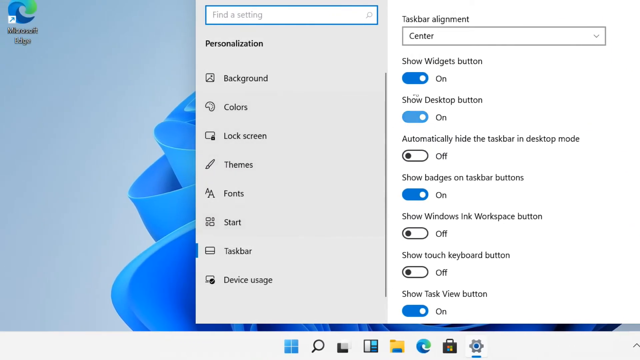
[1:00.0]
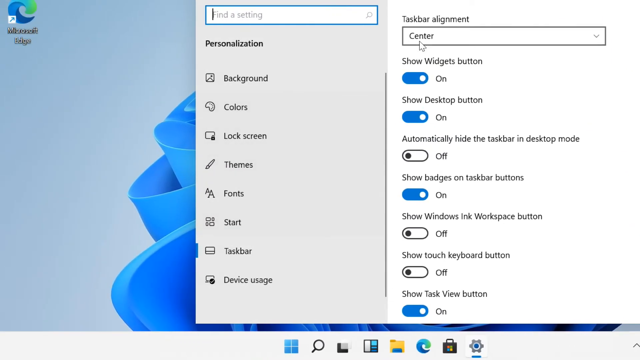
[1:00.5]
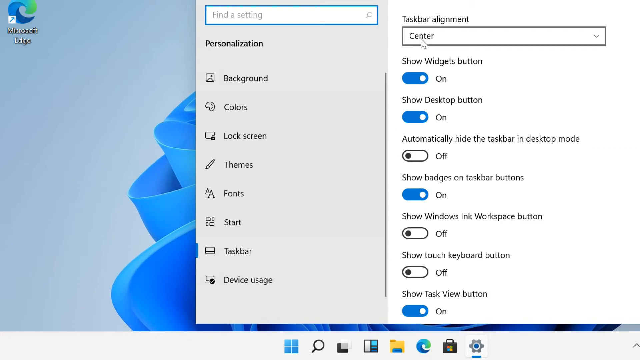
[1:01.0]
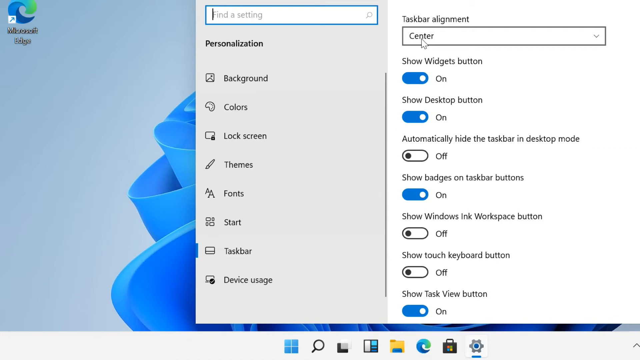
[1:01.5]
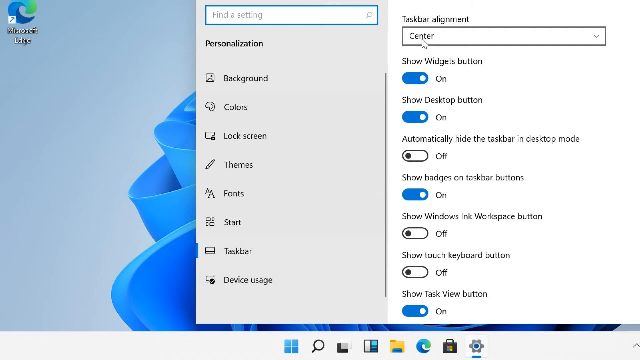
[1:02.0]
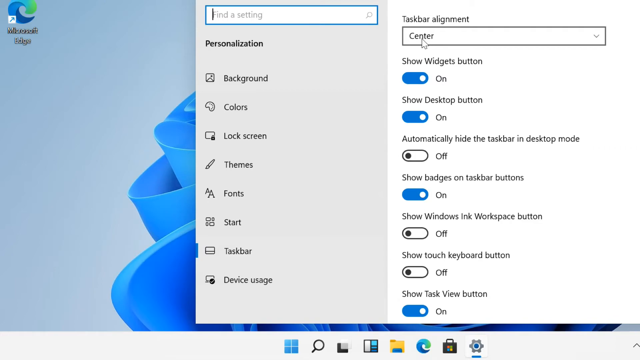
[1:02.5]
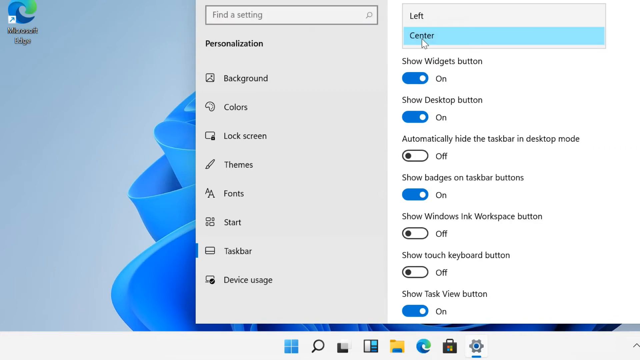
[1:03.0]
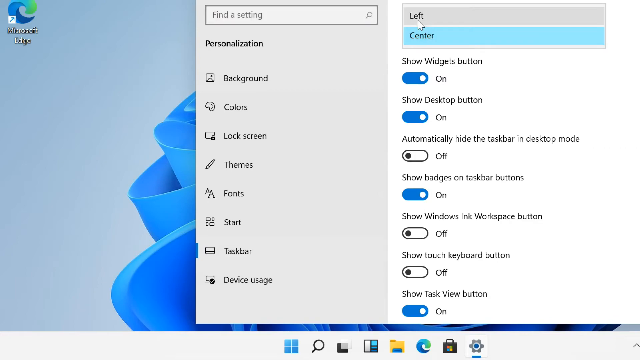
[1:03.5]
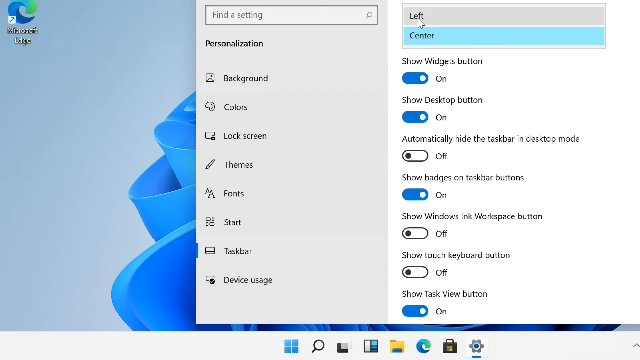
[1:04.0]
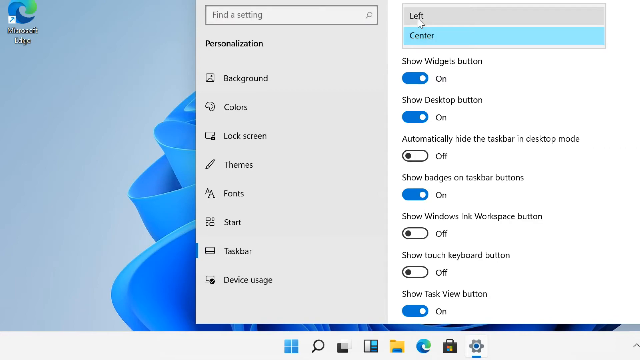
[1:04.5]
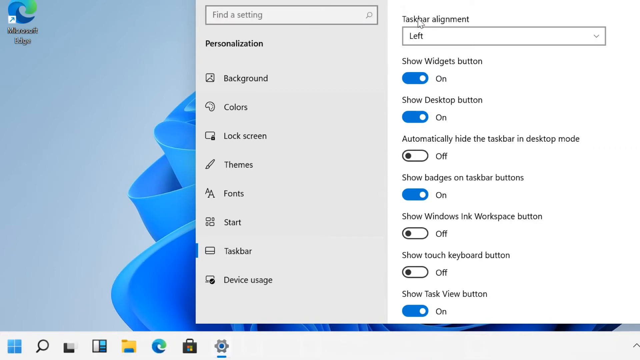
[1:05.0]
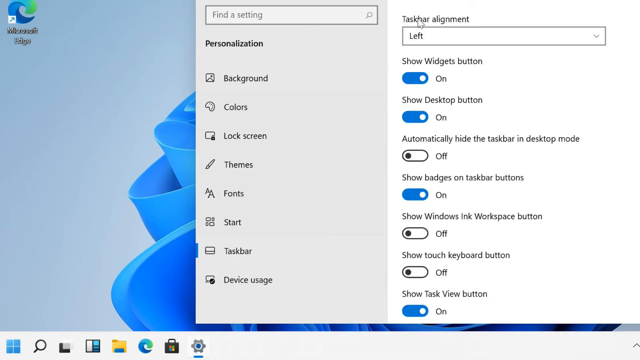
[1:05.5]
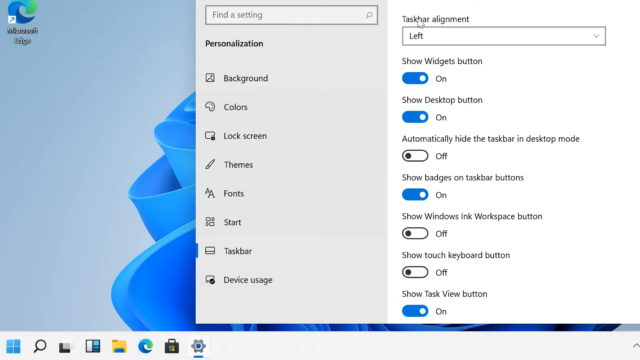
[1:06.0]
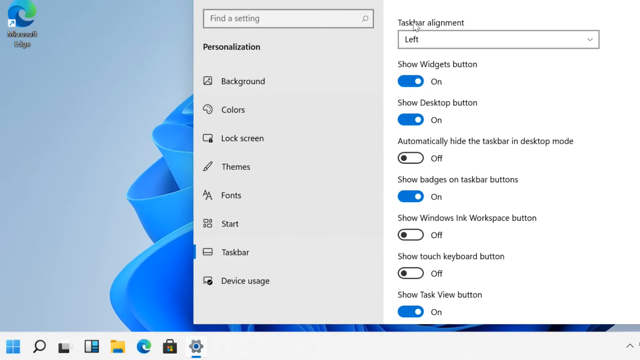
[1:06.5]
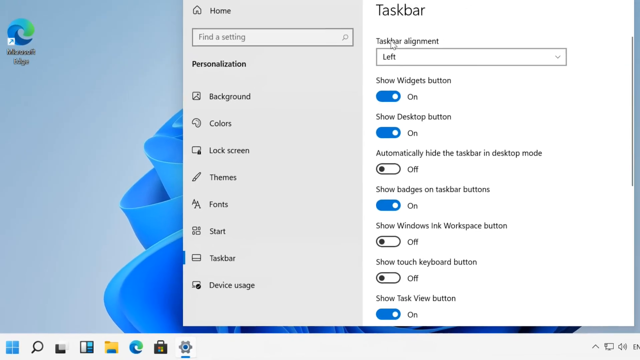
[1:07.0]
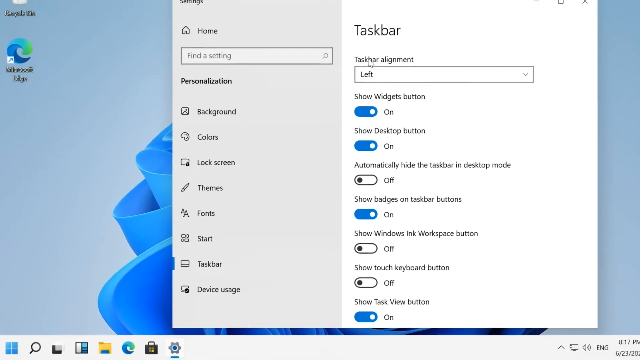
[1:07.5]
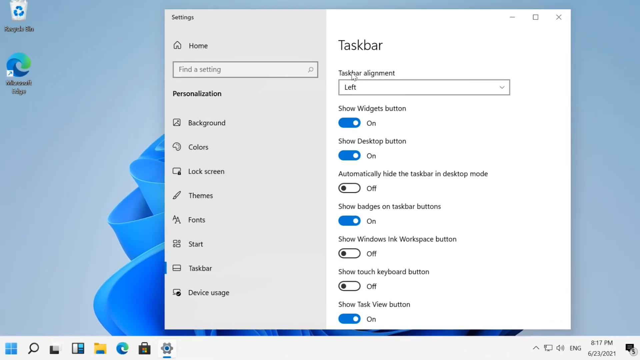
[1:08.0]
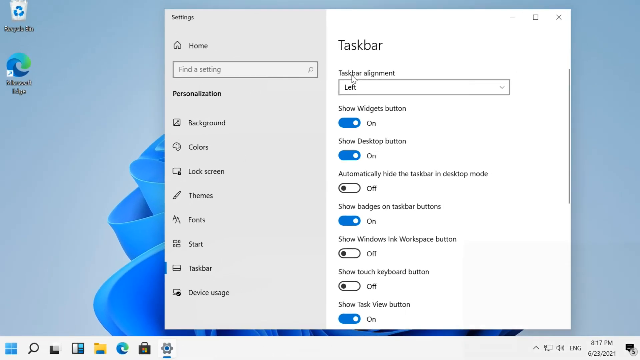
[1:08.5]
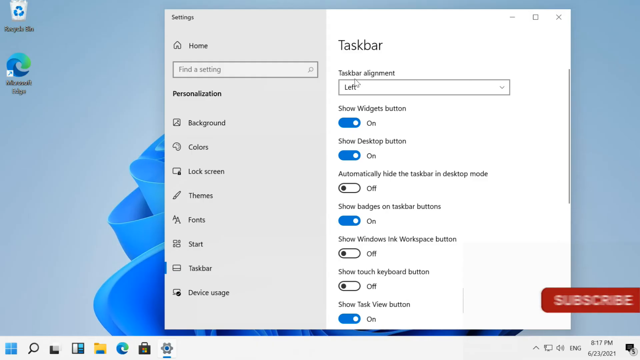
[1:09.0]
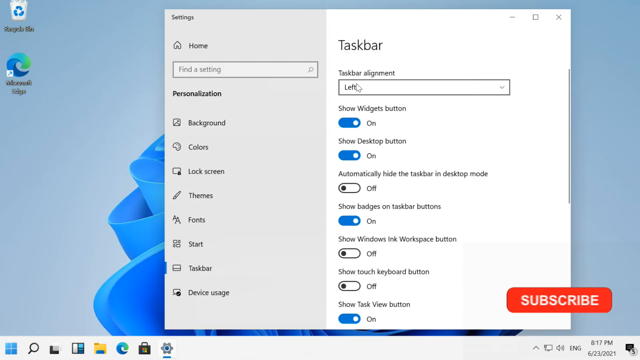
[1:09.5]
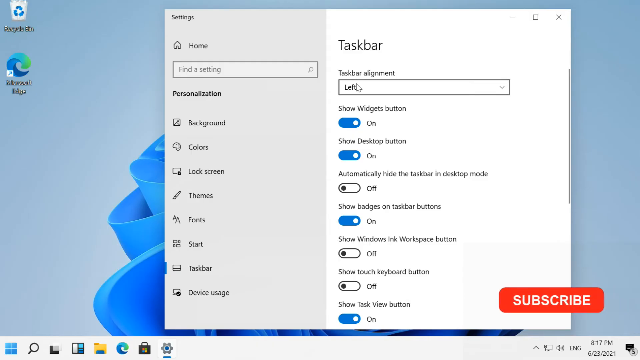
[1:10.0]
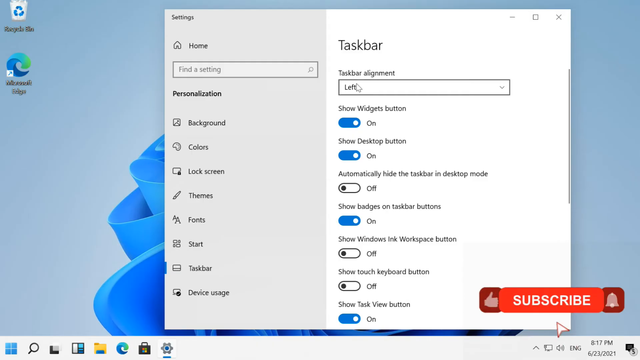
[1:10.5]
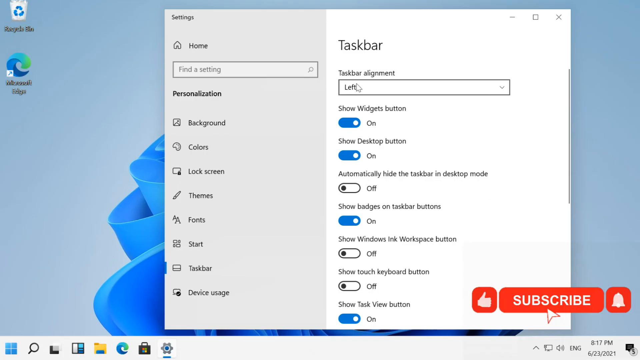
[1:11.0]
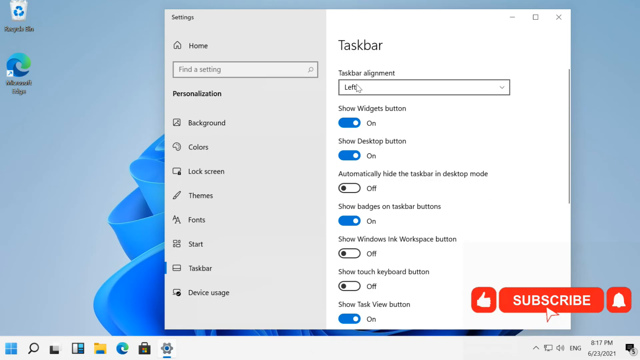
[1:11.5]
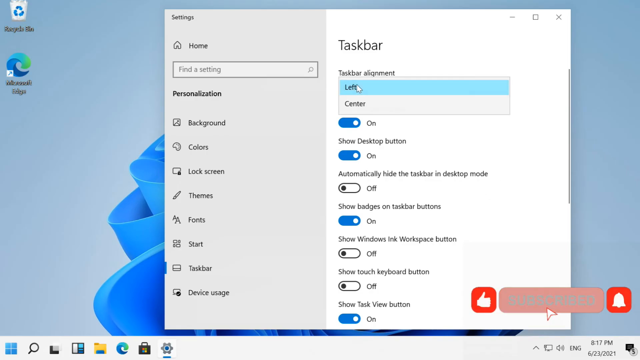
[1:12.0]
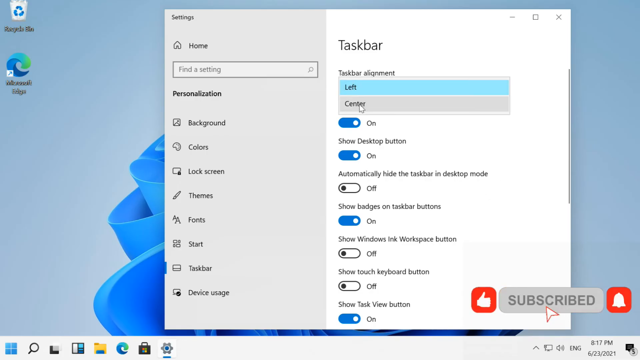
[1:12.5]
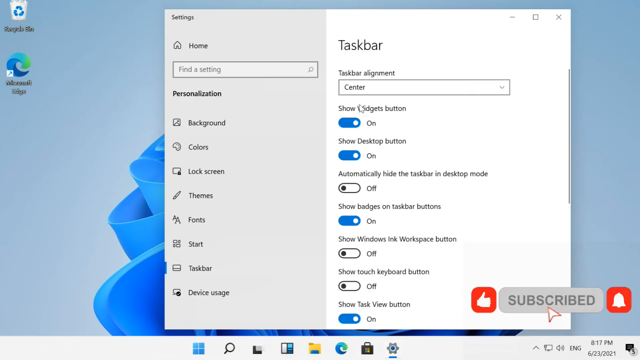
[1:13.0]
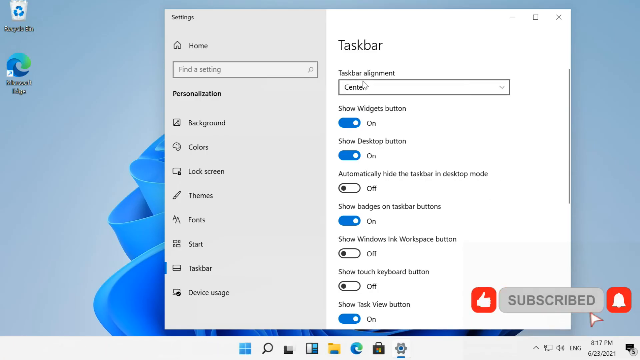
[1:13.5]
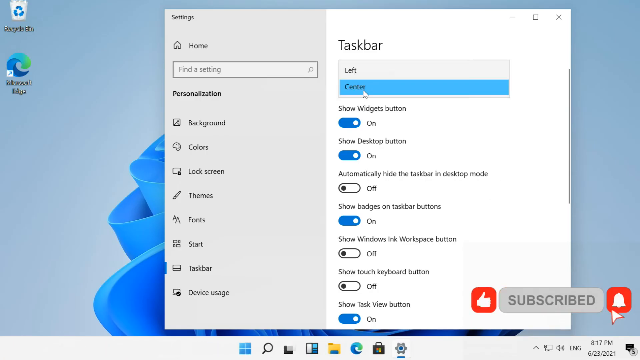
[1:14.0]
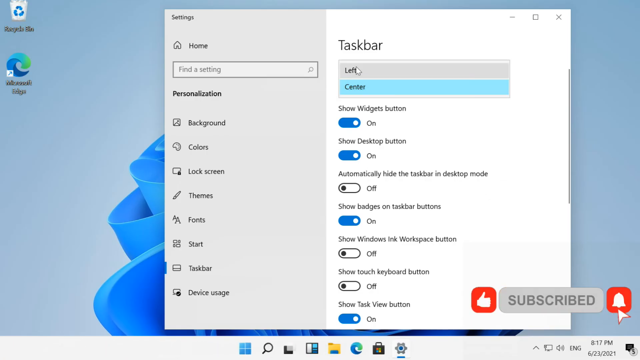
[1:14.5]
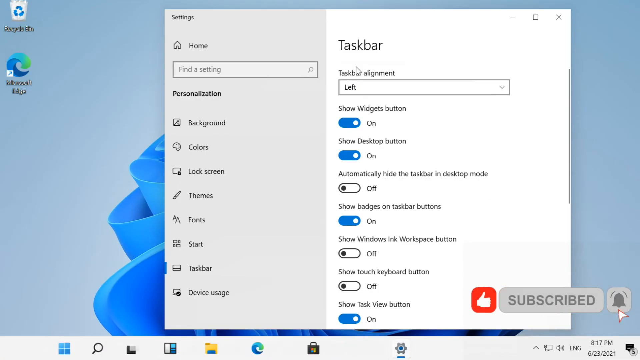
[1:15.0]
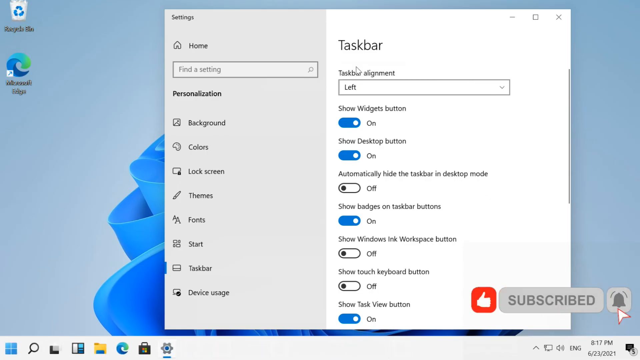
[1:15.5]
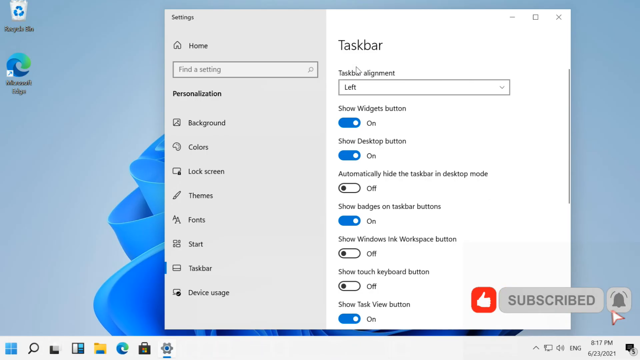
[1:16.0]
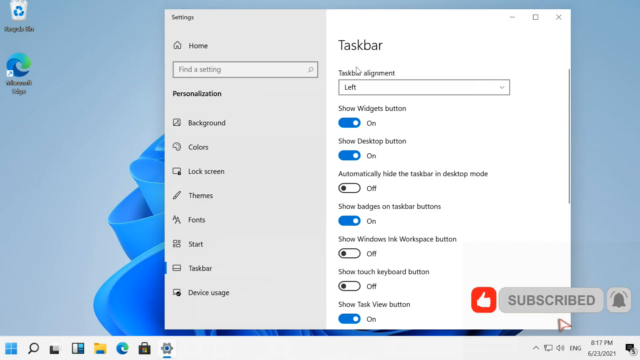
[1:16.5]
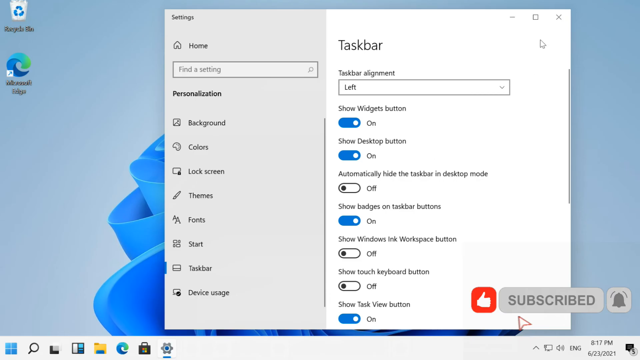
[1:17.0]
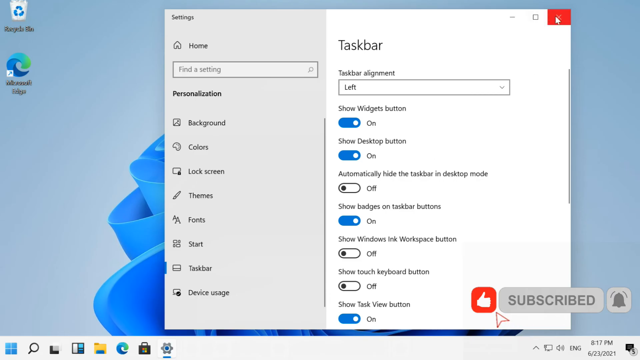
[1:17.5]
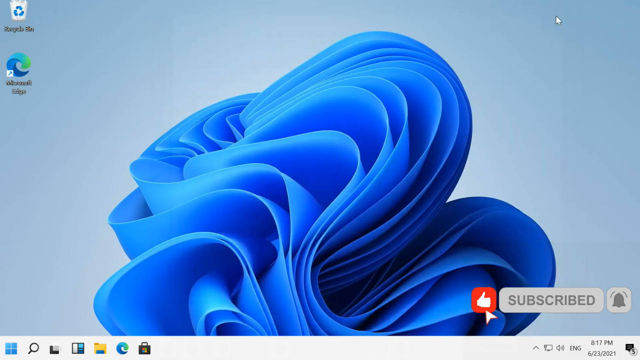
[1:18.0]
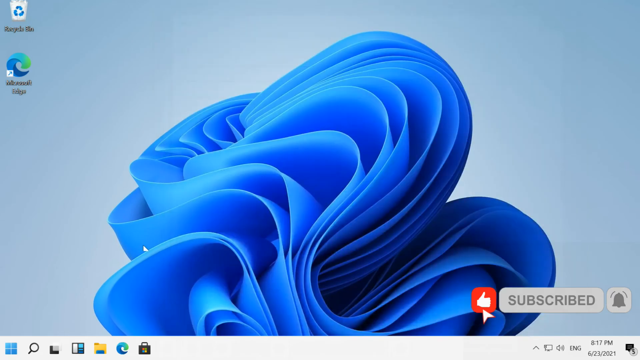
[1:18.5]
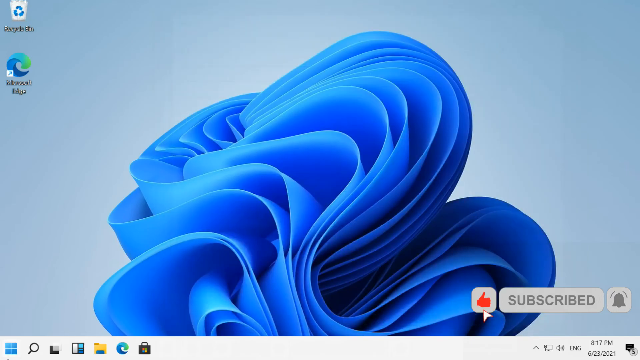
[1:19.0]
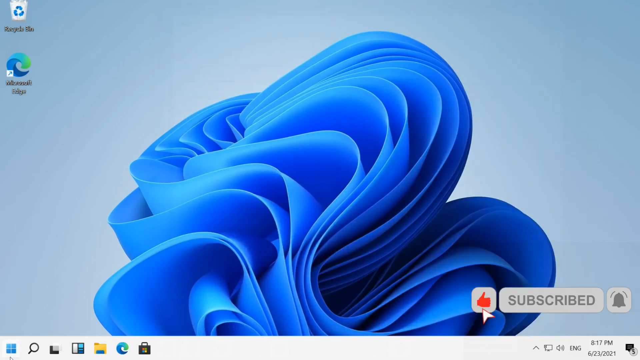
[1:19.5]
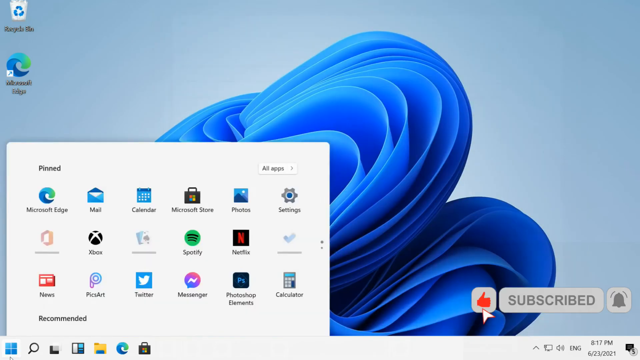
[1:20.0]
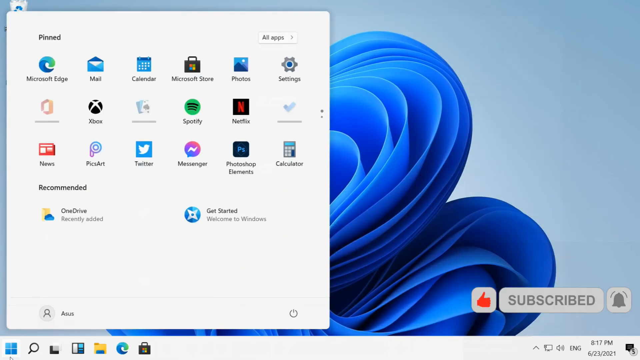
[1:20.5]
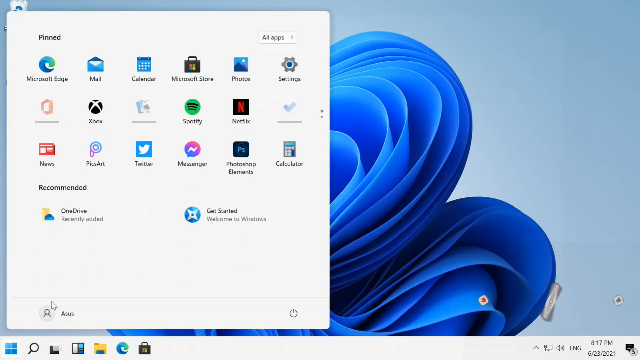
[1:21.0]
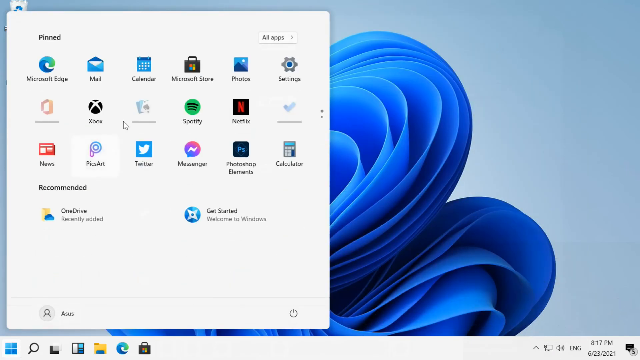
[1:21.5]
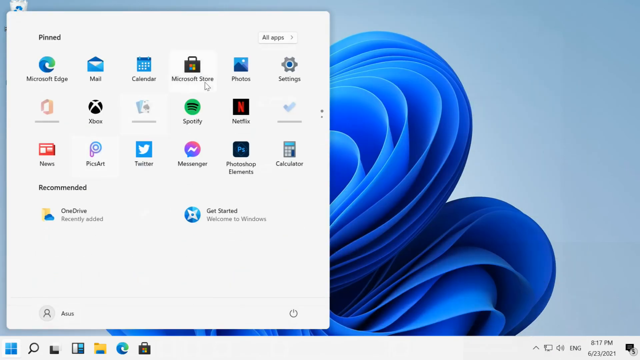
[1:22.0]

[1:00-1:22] The taskbar settings are on screen. The user selects Taskbar Alignment and changes the taskbar from center to left, and the camera zooms out. An animation enters from the right side of the screen: a red rectangle with white "subscribe" written inside, with a red square containing a white thumbs up on one side and a red square containing a white notification bell on the other. A white cursor selects subscribe, which turns gray, then selects the notification bell, which turns gray, and lastly selects the thumbs up, which turns gray. While the animation plays, the user returns to taskbar alignment and changes it back to center and then back to left again. The user selects an X in the top right of the box, which turns red, and the screen returns to the original desktop background. The pinned apps pop up on the left side of the screen.